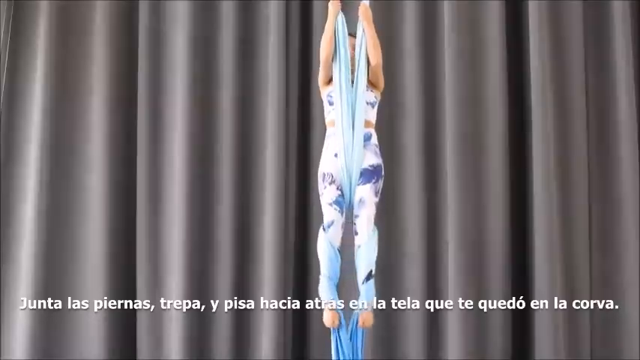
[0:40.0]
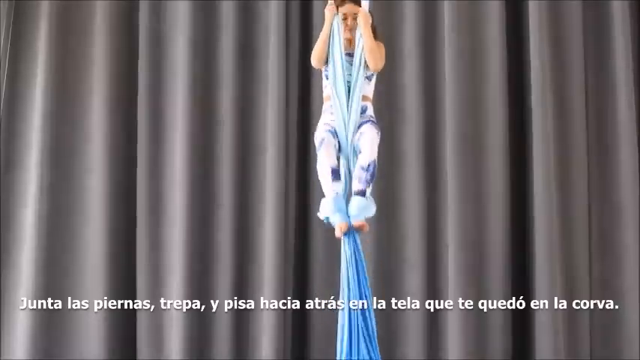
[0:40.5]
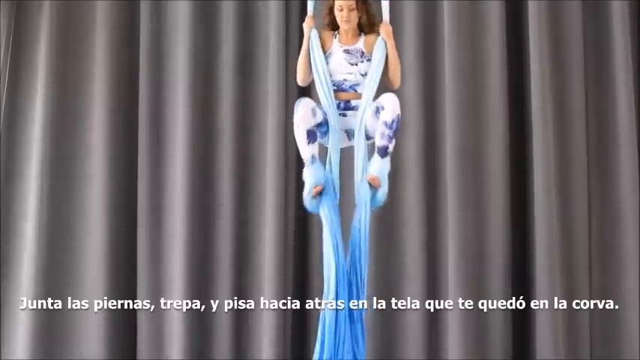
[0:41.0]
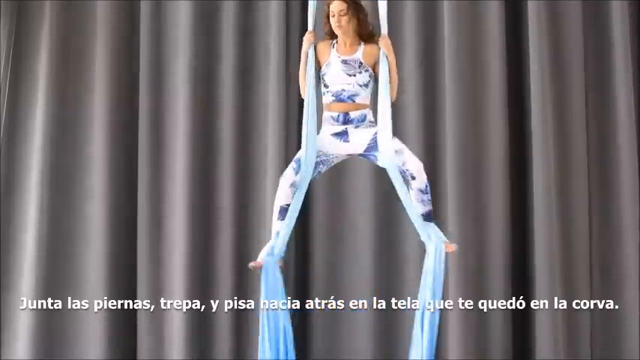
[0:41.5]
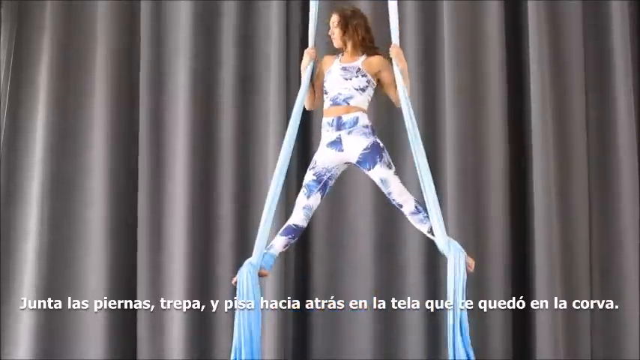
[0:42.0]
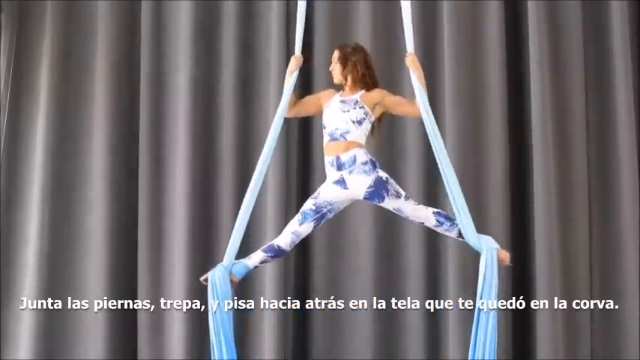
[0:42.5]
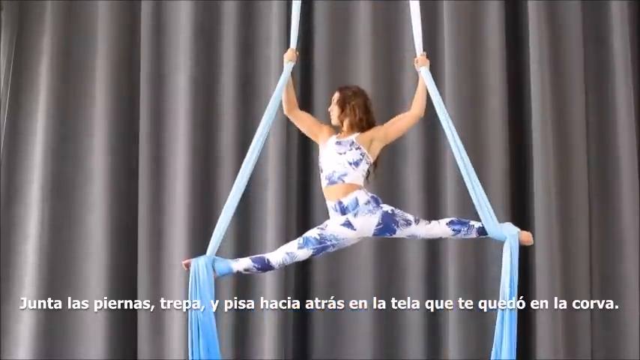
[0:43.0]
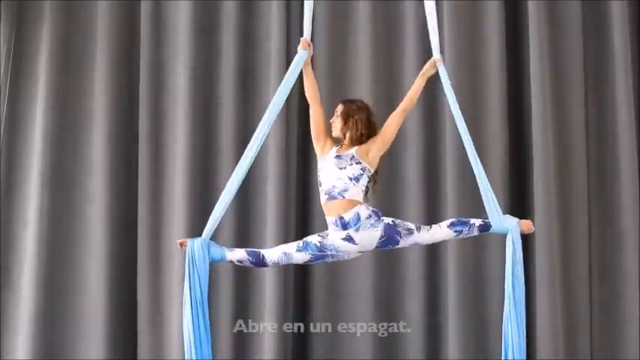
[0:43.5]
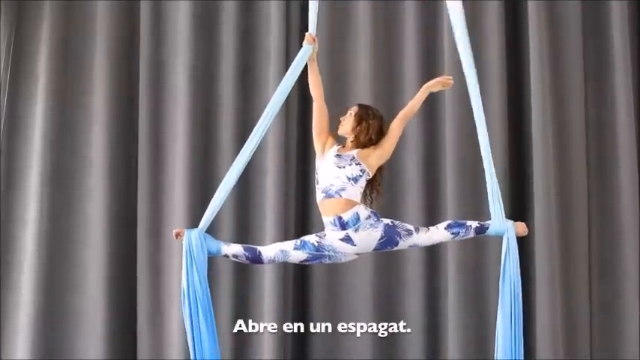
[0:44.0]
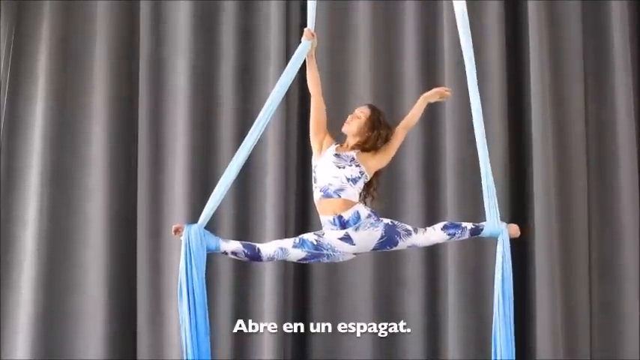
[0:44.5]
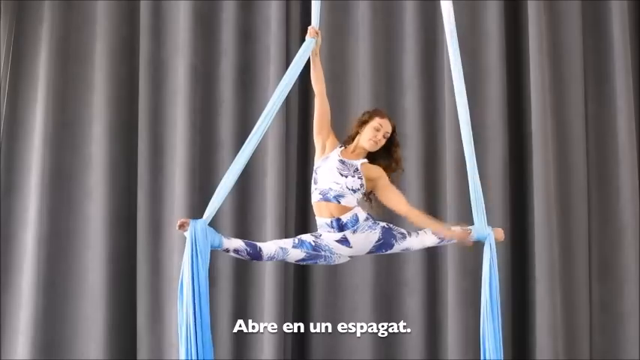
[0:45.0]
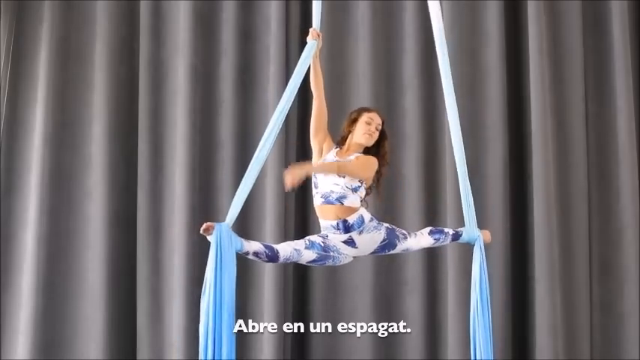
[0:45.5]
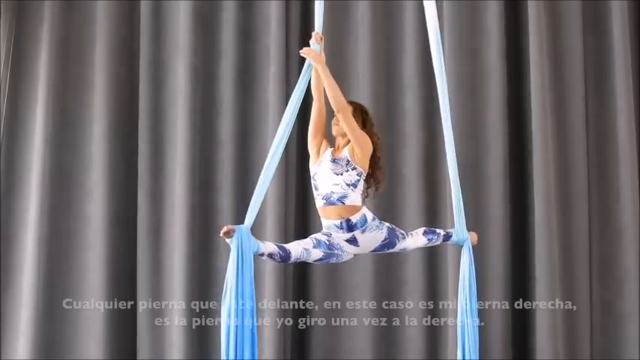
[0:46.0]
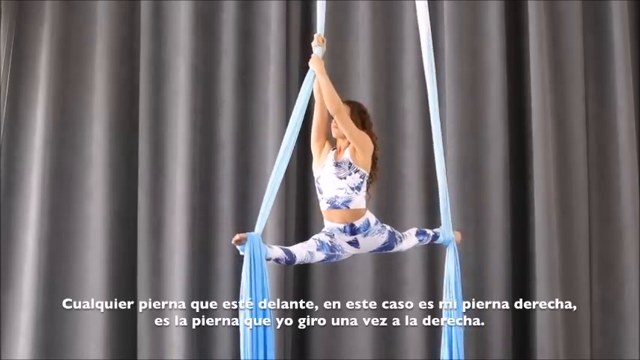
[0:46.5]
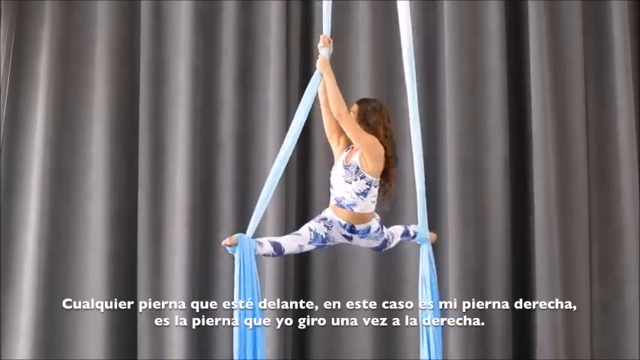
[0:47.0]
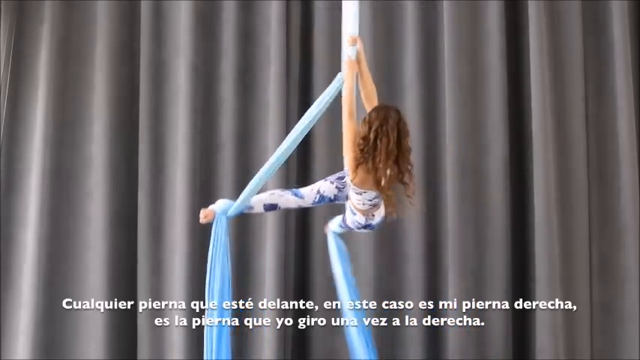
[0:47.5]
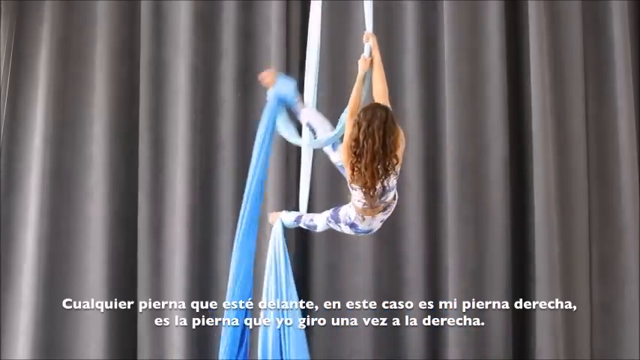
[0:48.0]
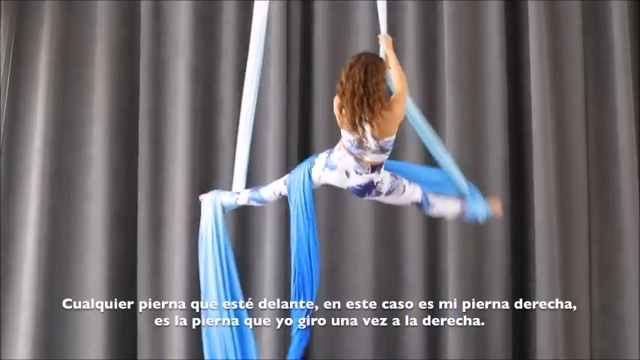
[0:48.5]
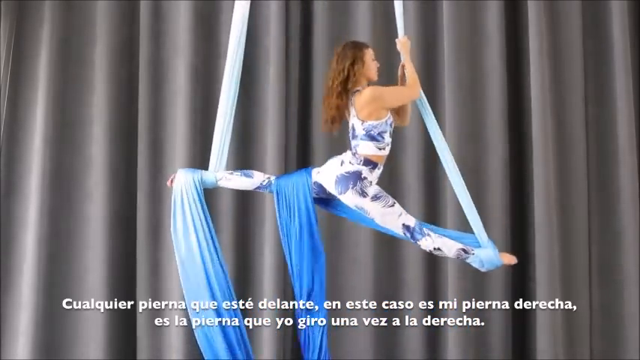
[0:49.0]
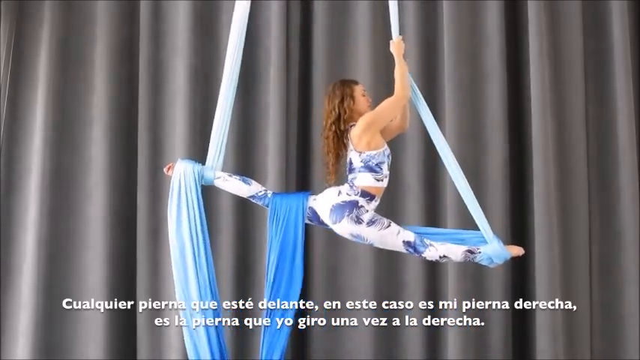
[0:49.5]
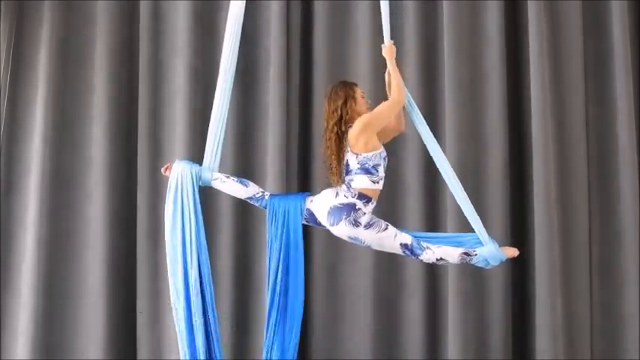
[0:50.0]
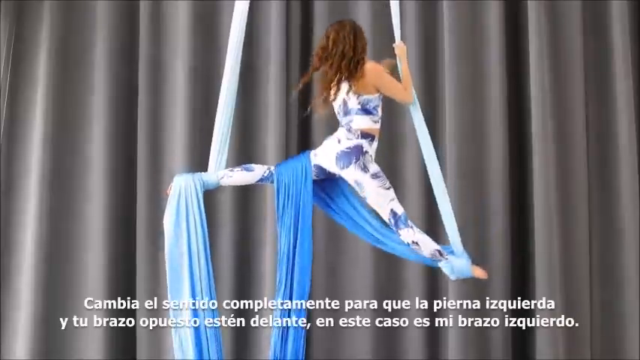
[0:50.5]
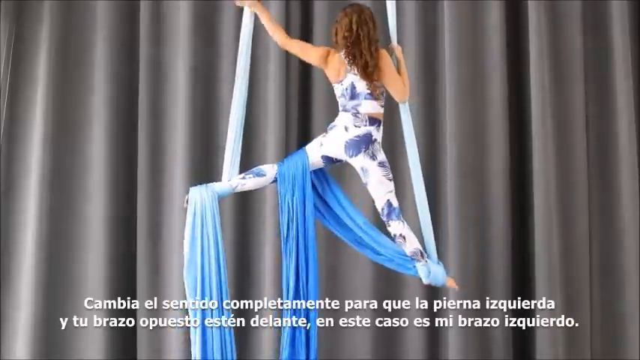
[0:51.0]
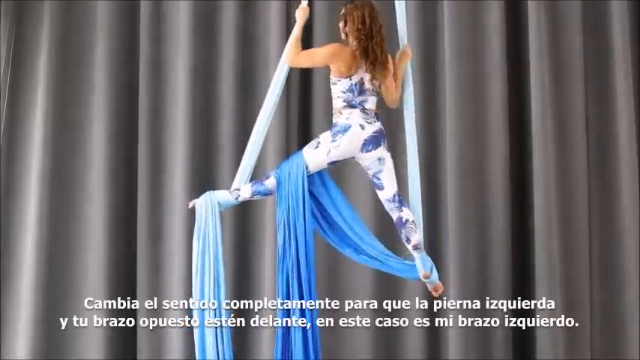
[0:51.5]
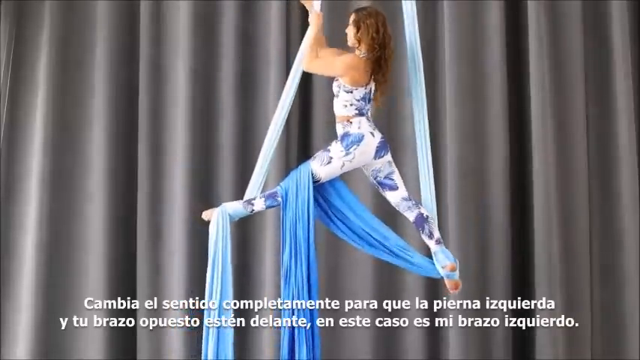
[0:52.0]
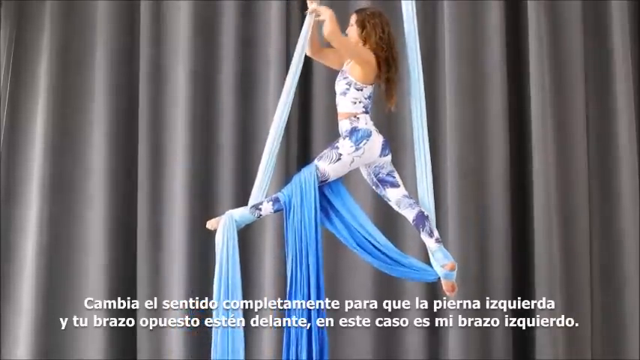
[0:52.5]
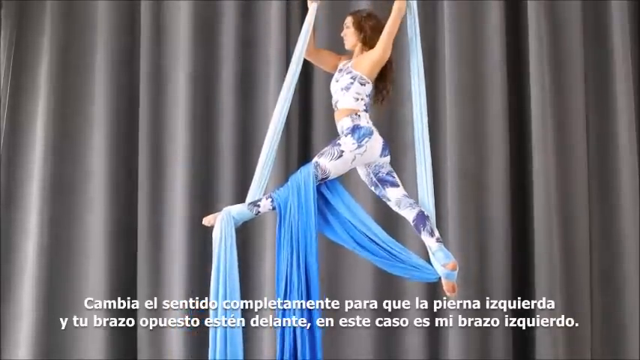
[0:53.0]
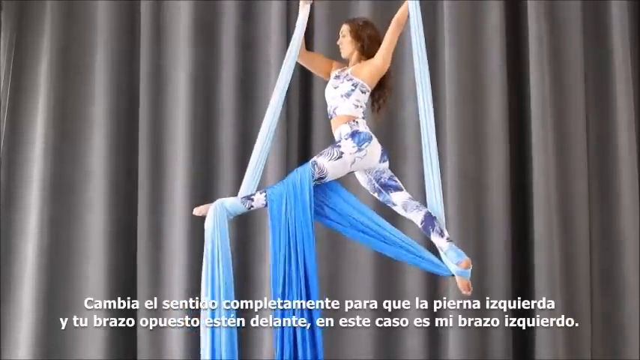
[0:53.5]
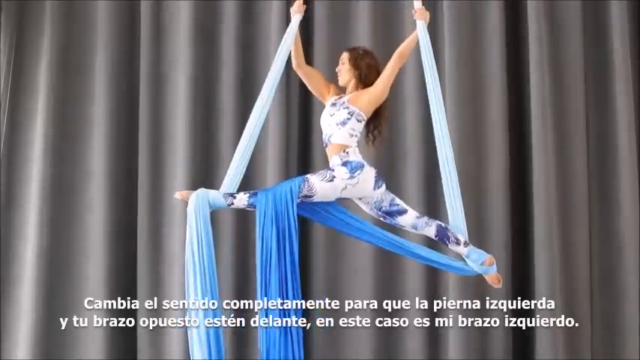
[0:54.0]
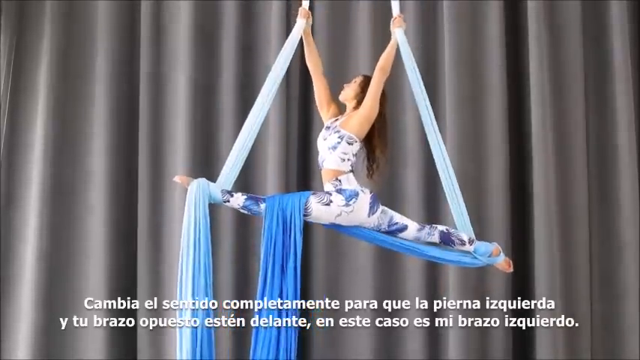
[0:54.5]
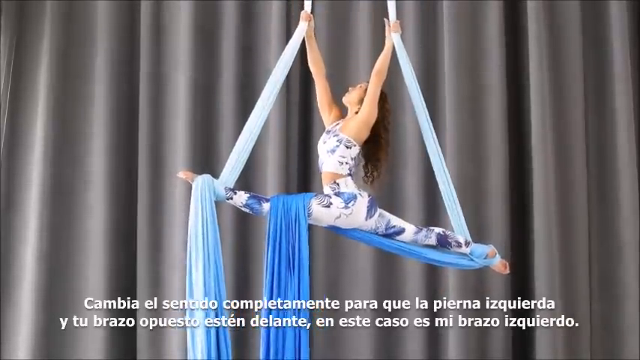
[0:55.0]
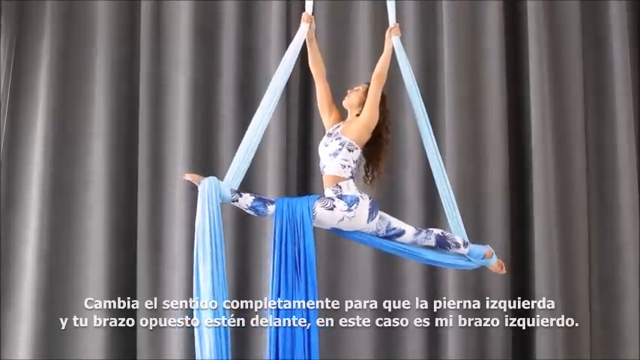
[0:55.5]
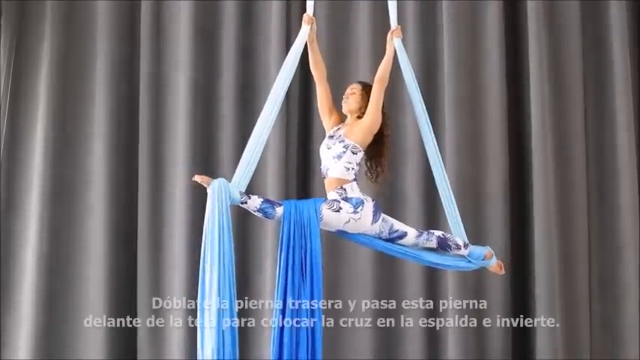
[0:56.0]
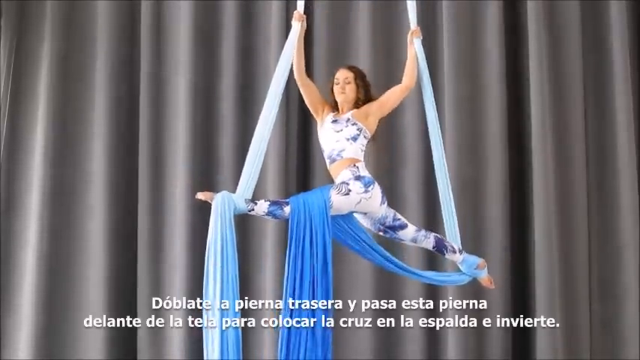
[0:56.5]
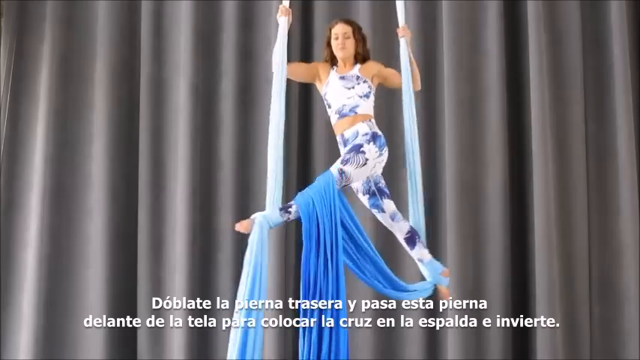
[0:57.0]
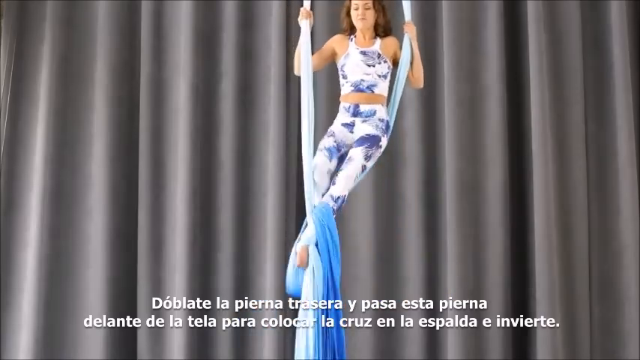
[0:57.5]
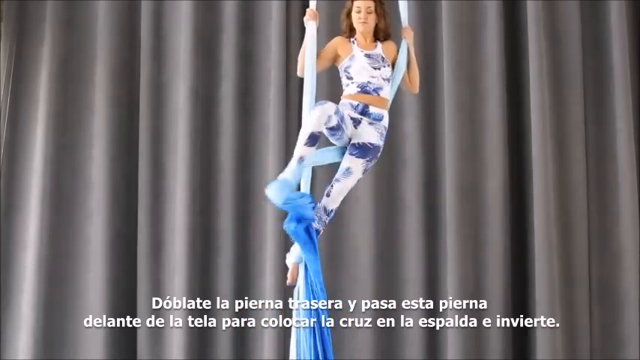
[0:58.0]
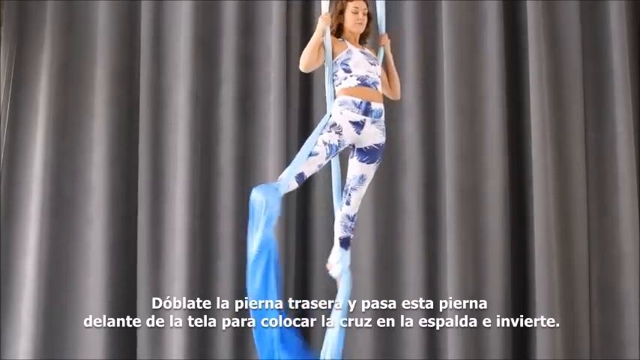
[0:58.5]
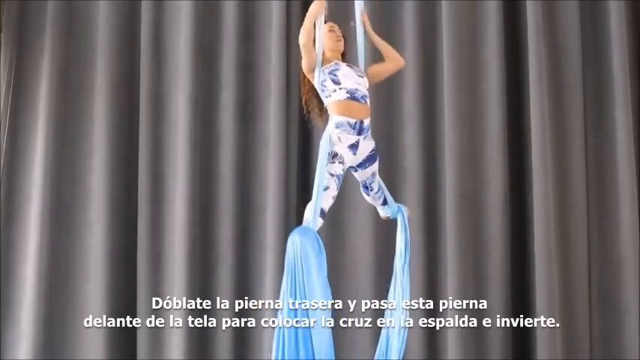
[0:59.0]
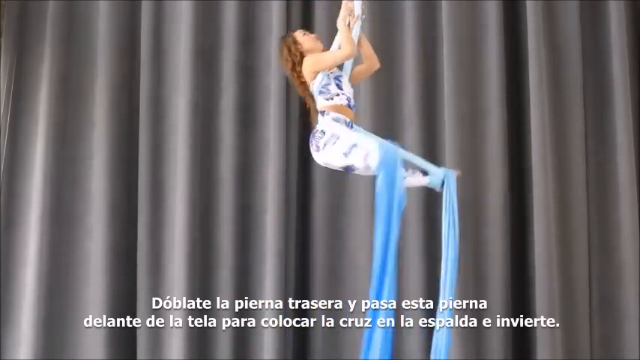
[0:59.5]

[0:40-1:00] A woman doing an aerial performance wraps the blue material around both of her feet, then kind of flips her body so that part of the material goes over her leg. She does the splits in midair. She looks toward the audience and bends low, then tries to bring her legs back together from that position while still kind of in the splits. She kind of turns herself backwards, and her hair hangs low.